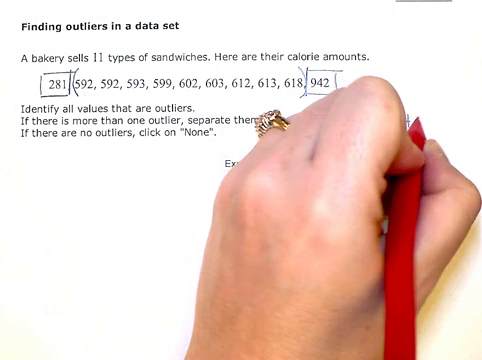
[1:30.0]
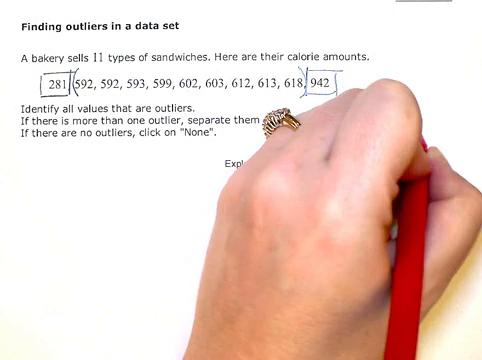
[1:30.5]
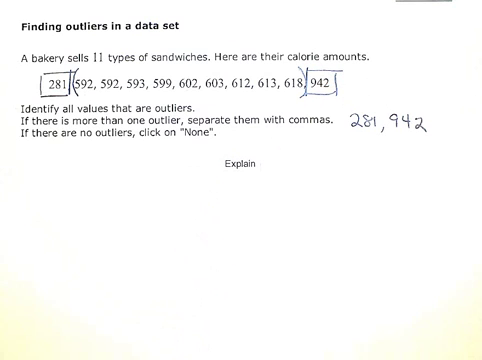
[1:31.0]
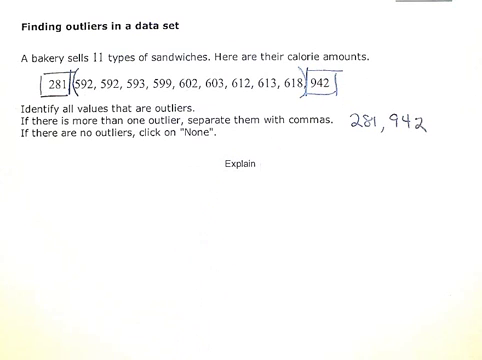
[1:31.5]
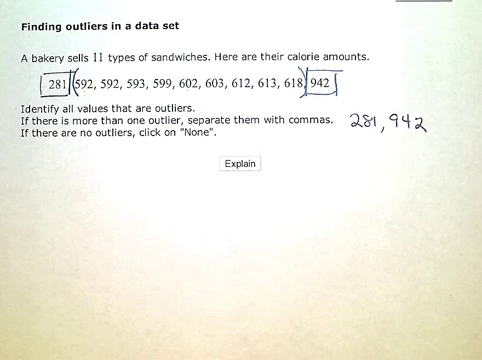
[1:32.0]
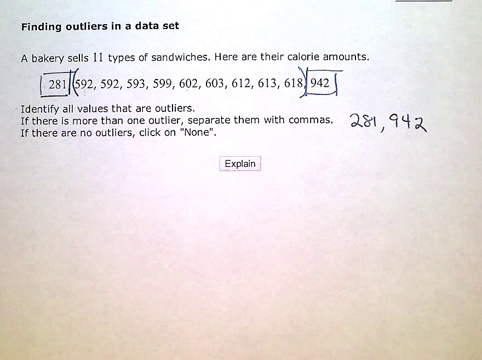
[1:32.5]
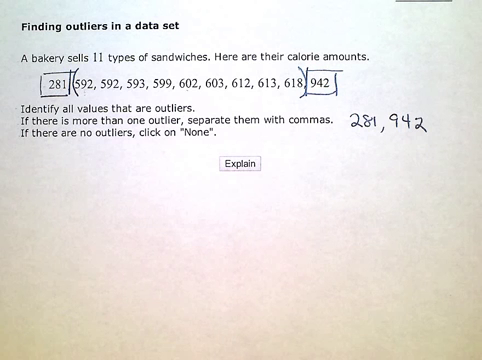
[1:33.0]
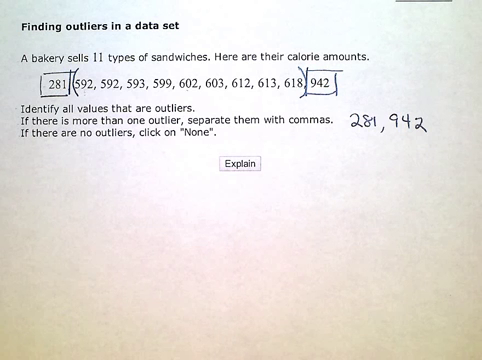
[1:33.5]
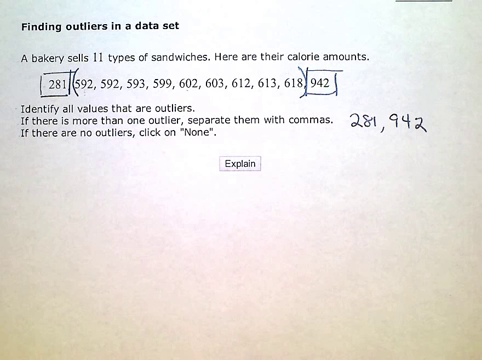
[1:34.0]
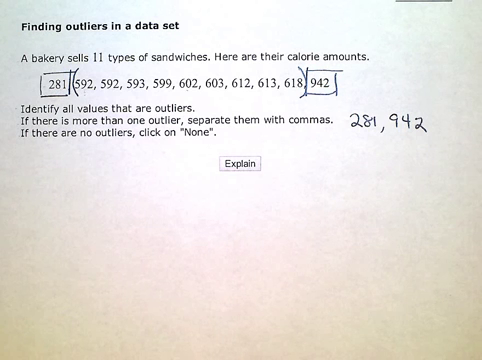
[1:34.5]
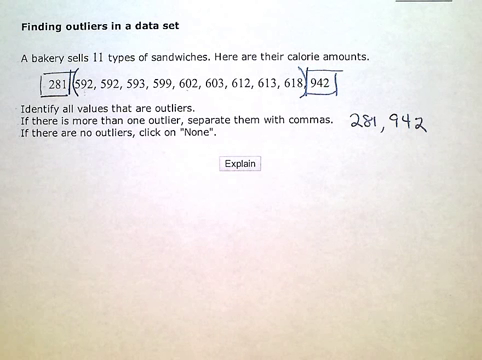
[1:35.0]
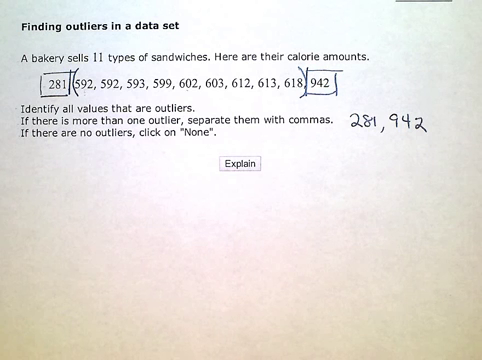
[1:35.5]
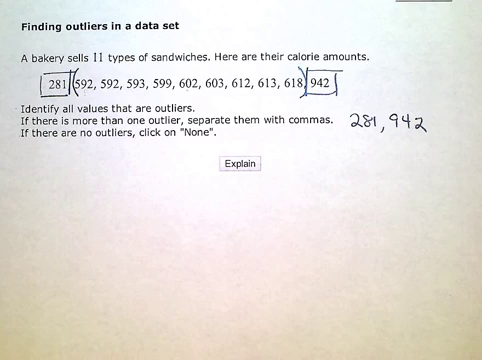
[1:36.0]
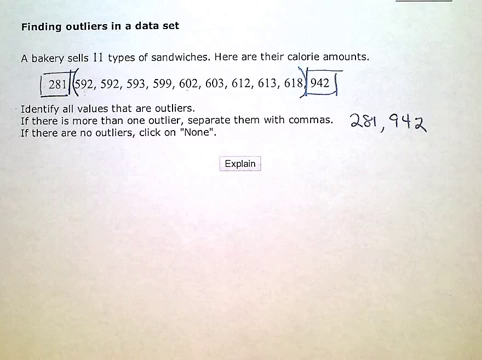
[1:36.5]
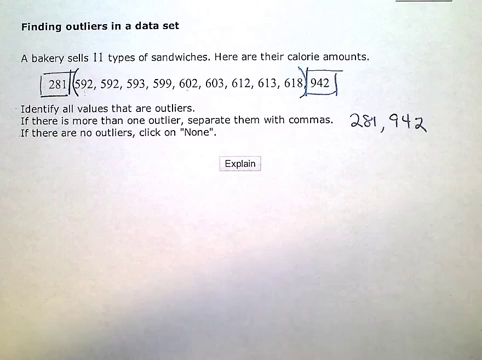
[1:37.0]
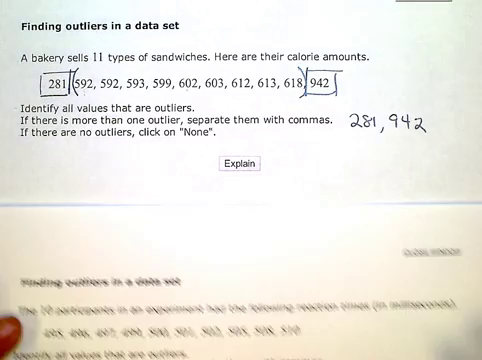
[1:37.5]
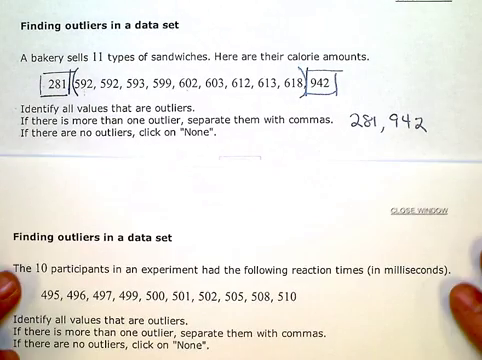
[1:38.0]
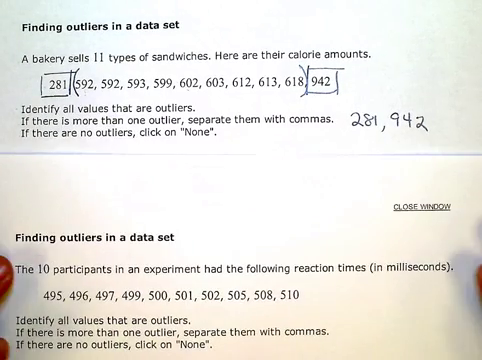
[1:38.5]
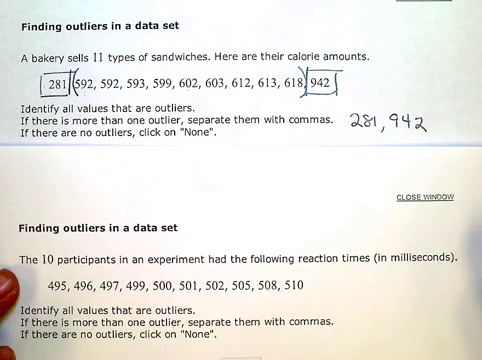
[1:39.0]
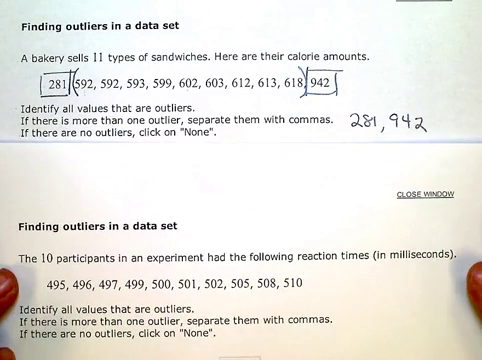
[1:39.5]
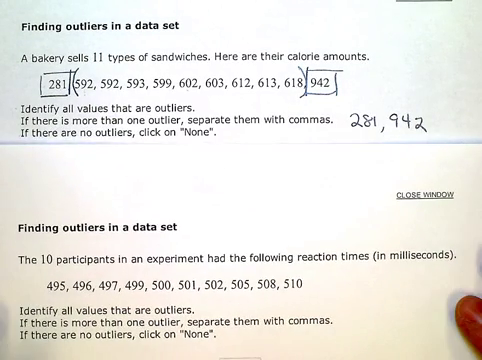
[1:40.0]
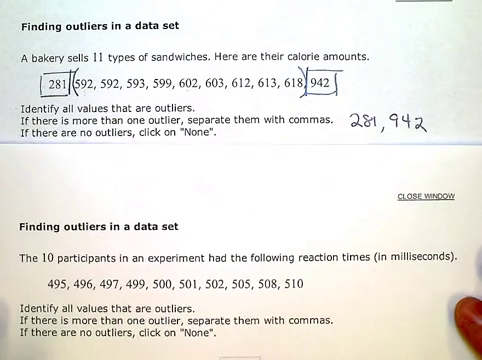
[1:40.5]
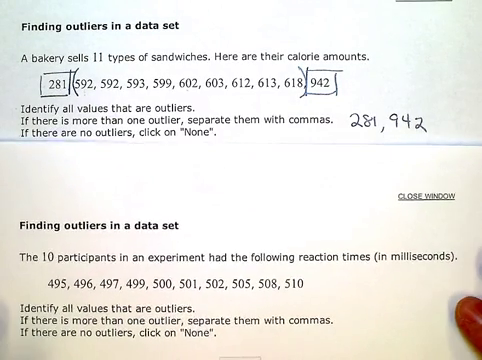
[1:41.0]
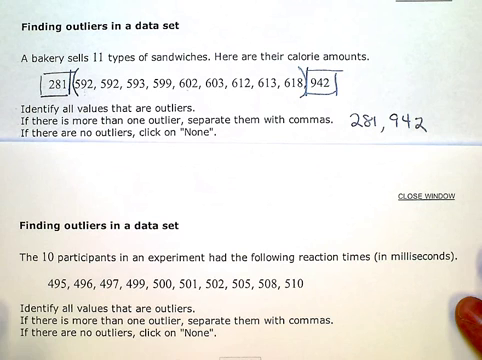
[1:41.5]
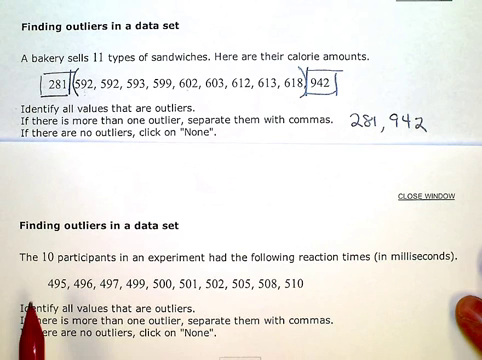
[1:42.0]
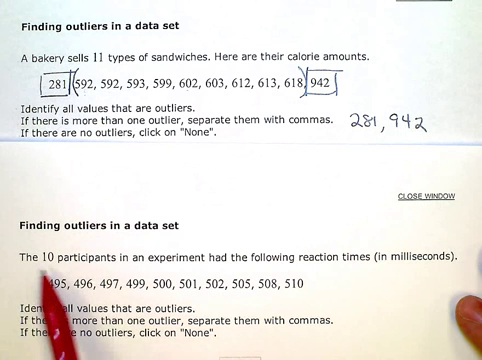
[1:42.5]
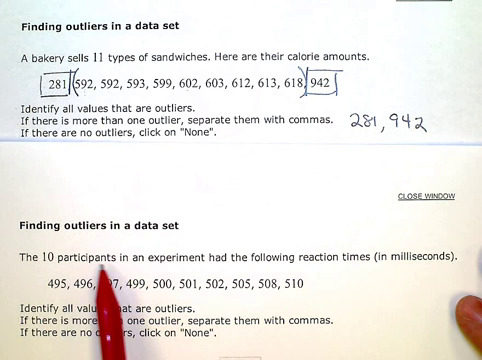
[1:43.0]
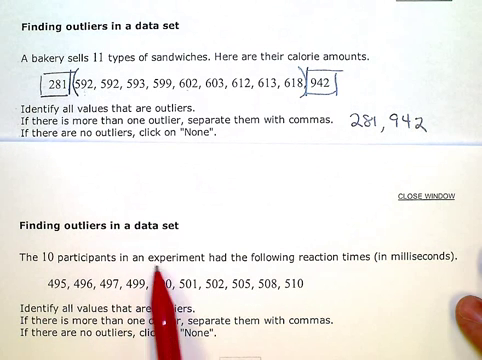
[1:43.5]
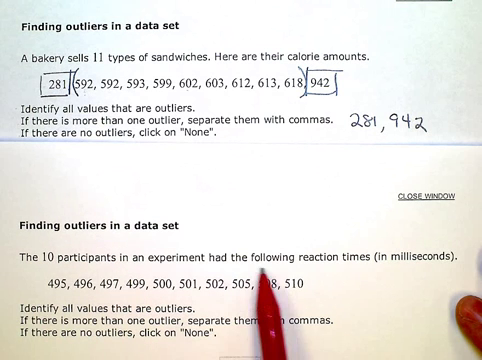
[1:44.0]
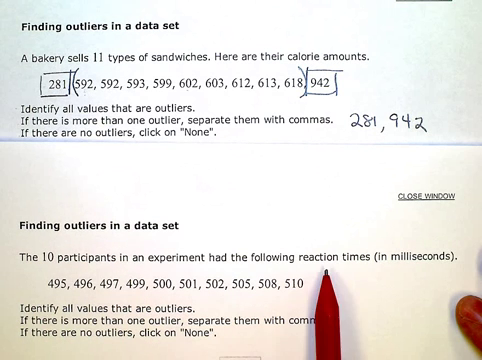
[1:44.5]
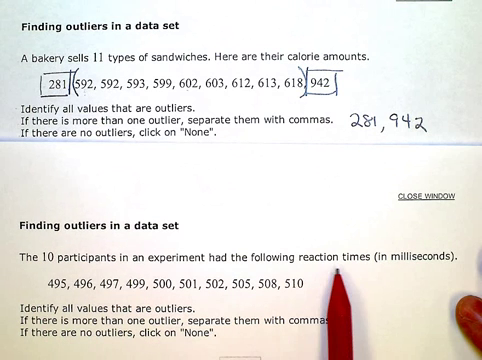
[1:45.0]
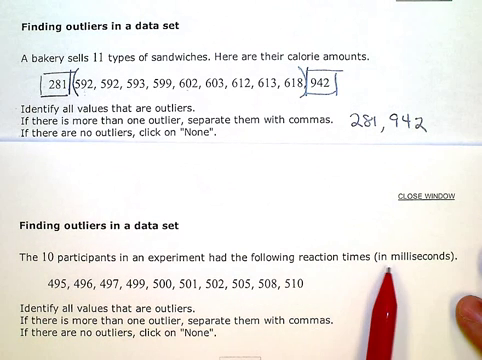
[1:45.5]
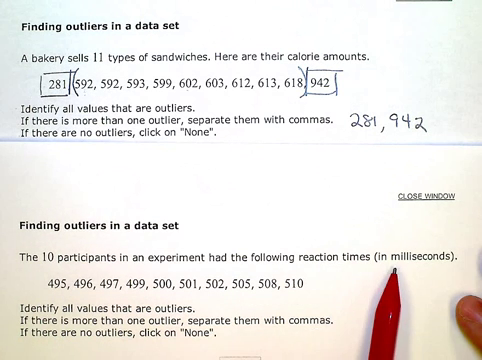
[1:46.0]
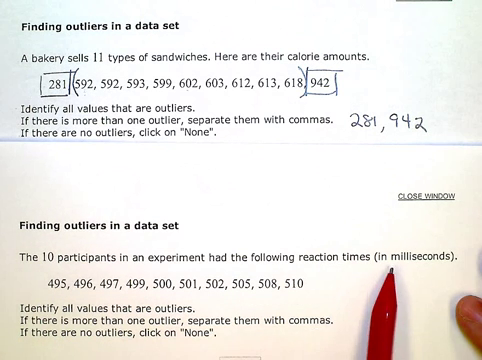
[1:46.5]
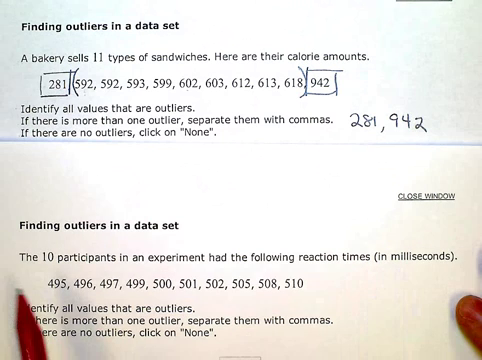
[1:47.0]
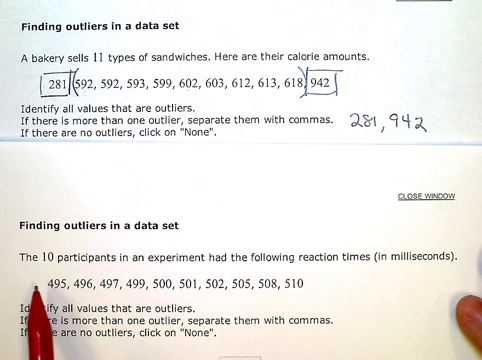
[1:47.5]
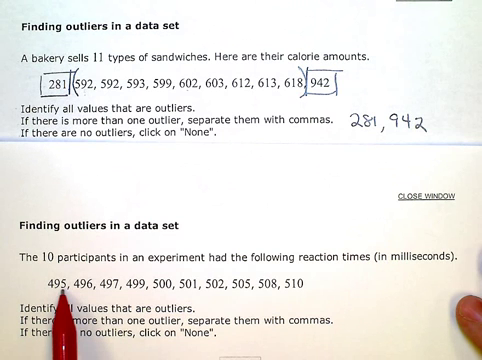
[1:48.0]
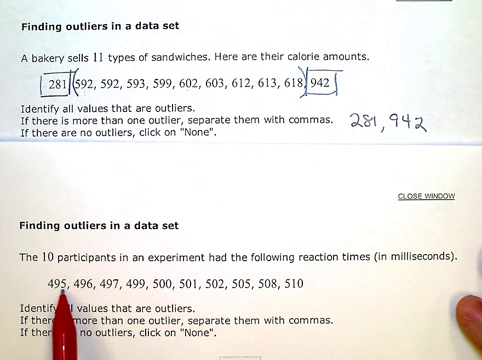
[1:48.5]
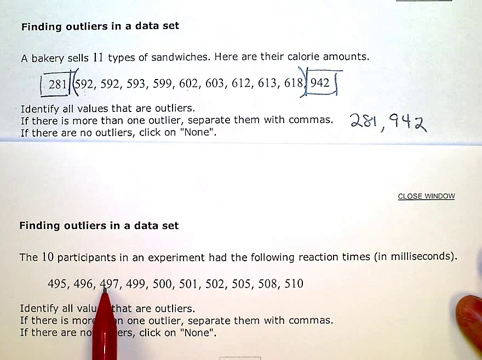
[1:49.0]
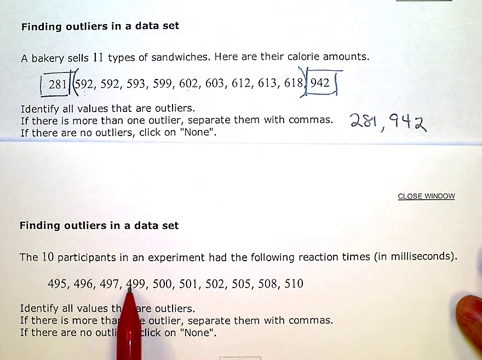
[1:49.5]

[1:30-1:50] The hand is to the right of the question, the pen balanced between the thumb, index and middle finger. Two numbers, the end numbers 281 and 942, have been written next to the second sentence, where it says "separate them with commas," marking them as the outliers. The screen then turns slightly and changes colour, and a new piece of paper is placed over the top that says "finding outliers in a data set": a new question. It is placed just underneath the initial question so that it shows halfway on the screen, and two fingers, one from the left hand and one from the right, hold it down. The paper is smoothed, moved up and adjusted into position. The pen then moves across the question from left to right and goes through the numbers one by one, again used as a pointer.